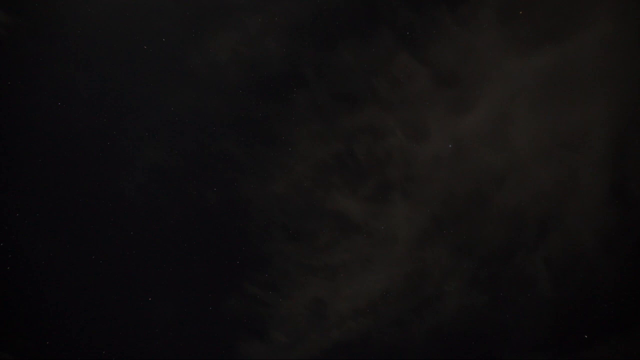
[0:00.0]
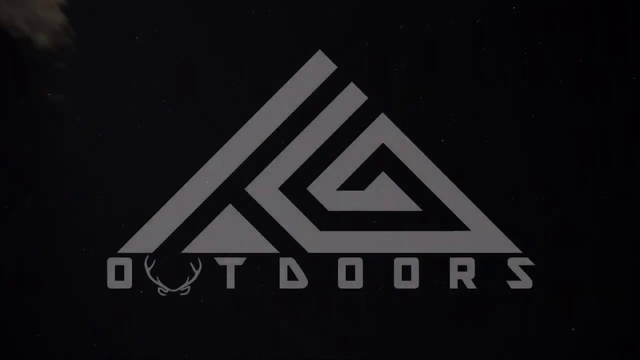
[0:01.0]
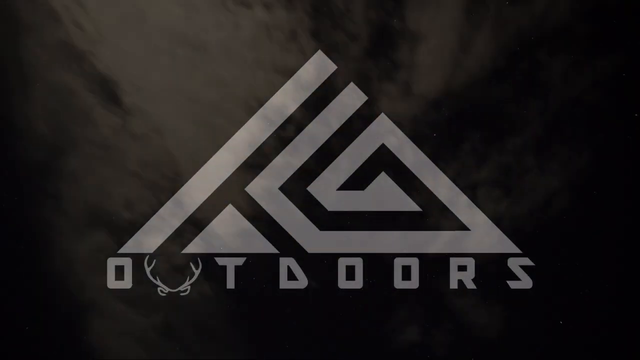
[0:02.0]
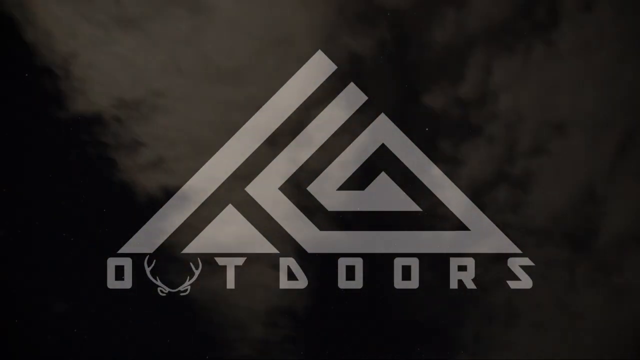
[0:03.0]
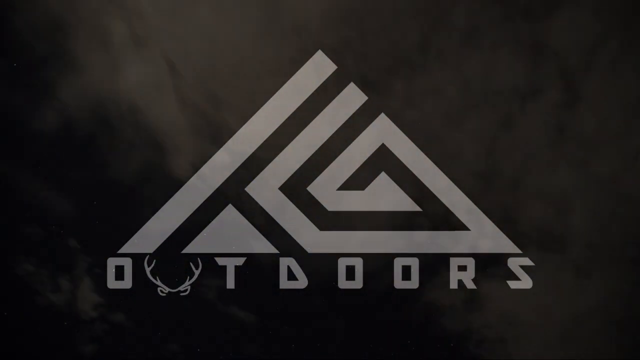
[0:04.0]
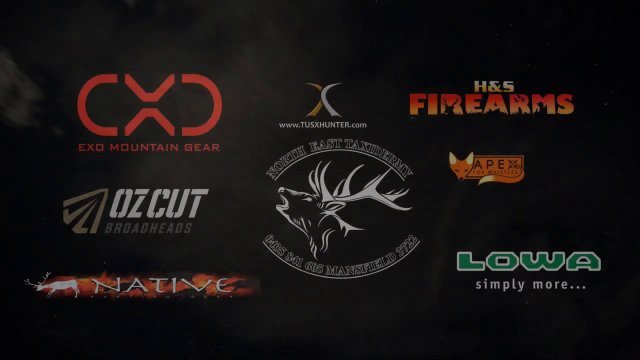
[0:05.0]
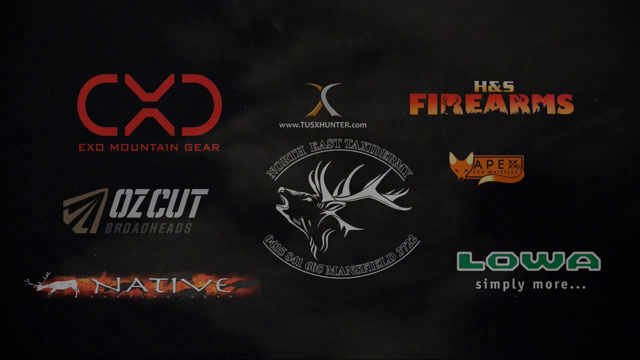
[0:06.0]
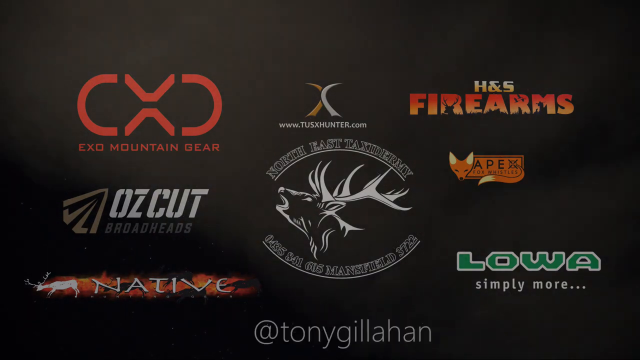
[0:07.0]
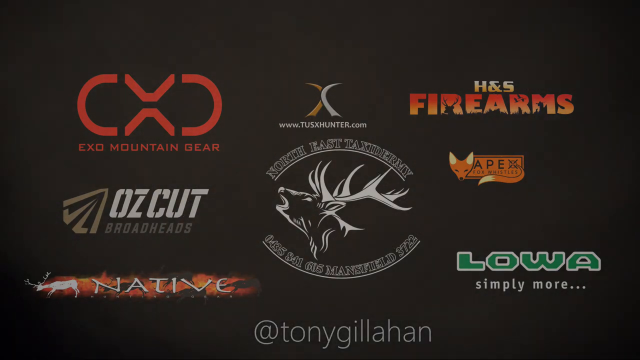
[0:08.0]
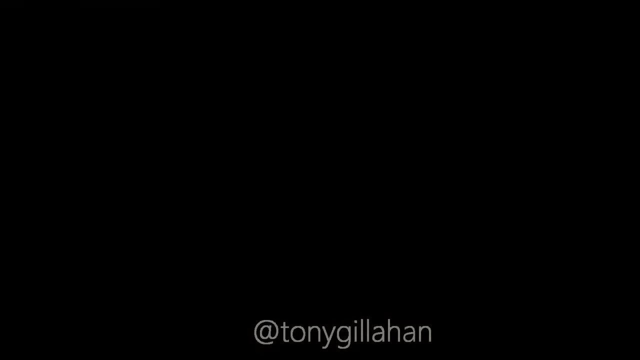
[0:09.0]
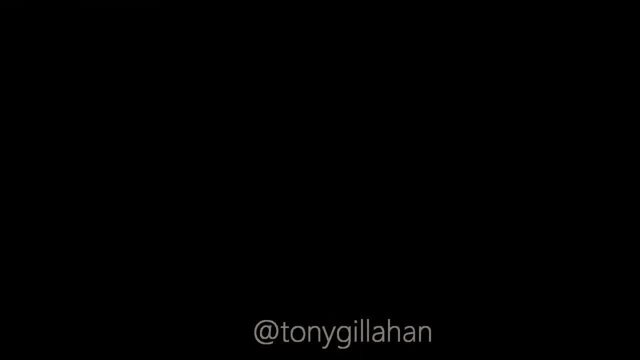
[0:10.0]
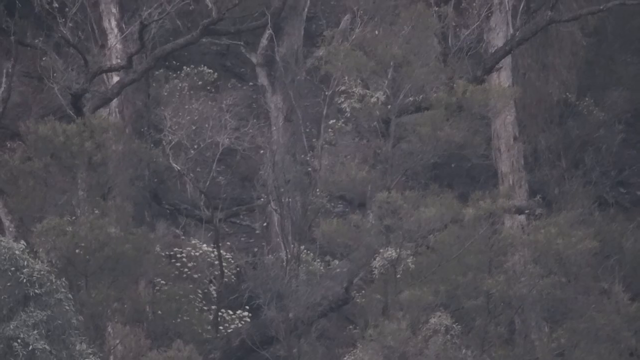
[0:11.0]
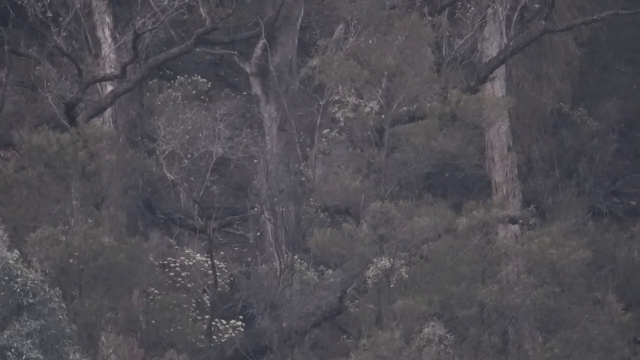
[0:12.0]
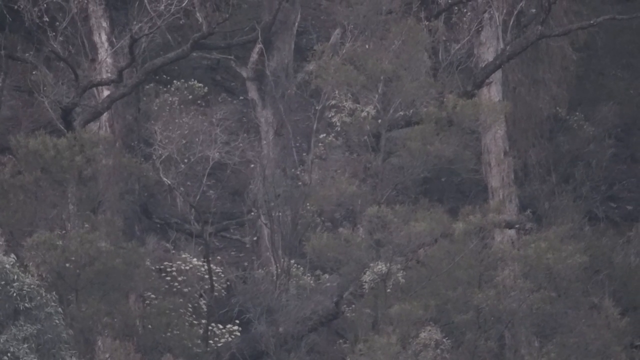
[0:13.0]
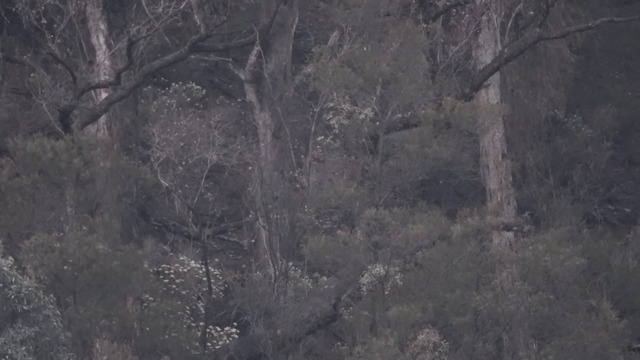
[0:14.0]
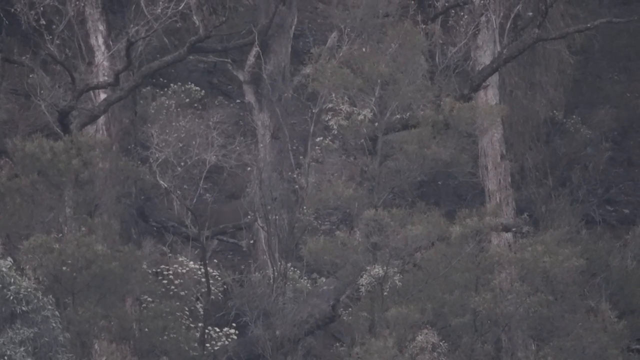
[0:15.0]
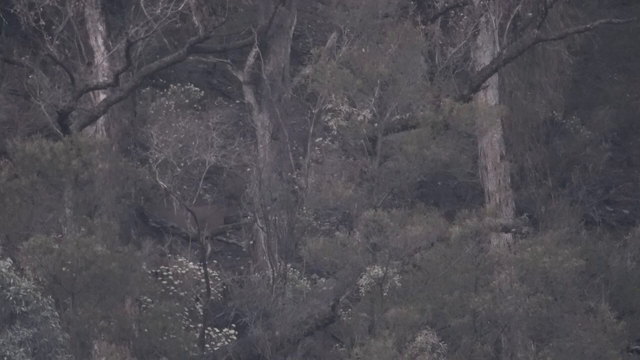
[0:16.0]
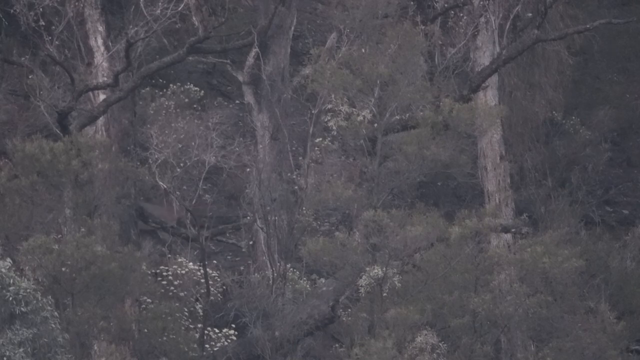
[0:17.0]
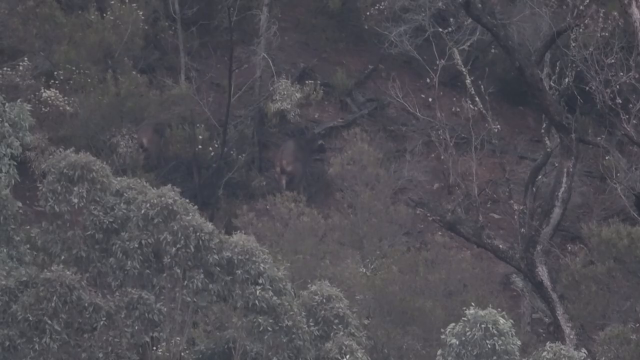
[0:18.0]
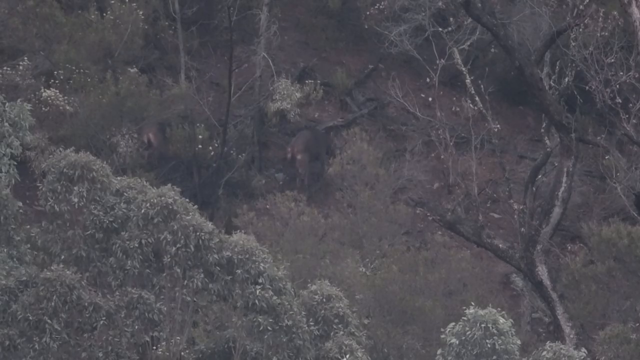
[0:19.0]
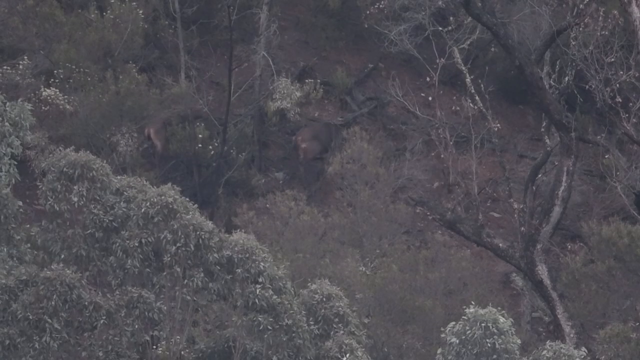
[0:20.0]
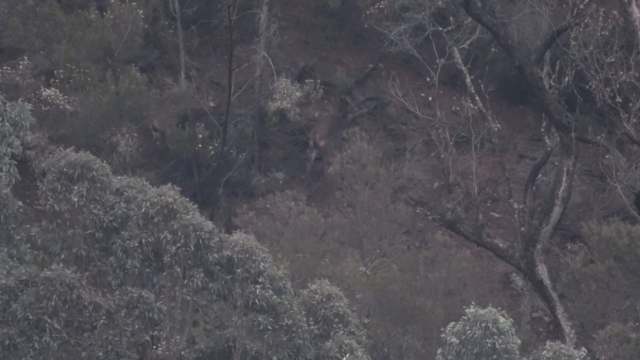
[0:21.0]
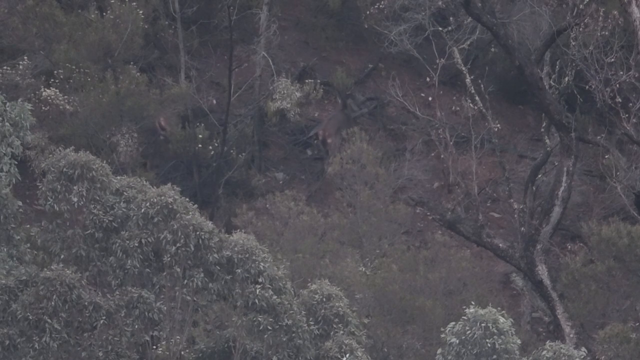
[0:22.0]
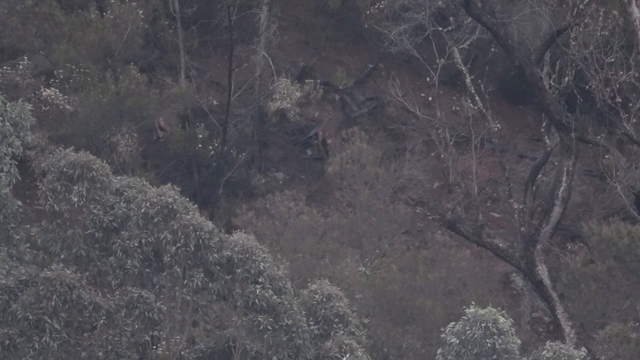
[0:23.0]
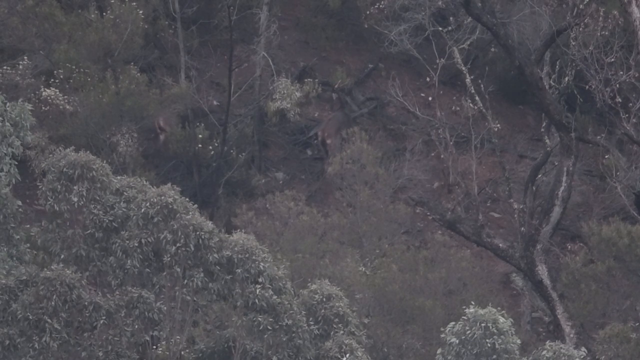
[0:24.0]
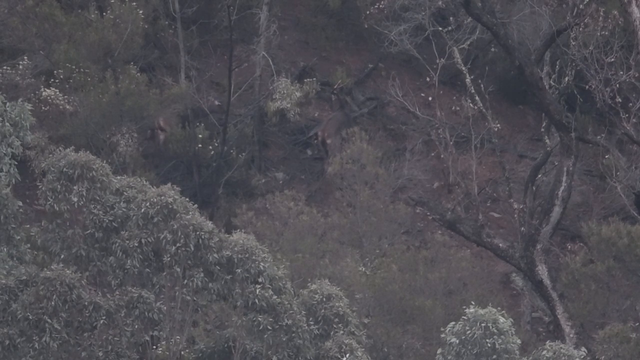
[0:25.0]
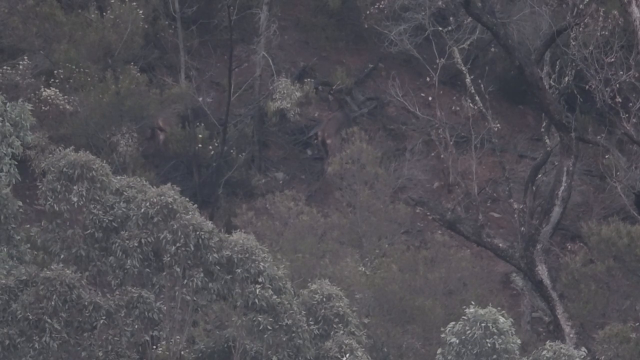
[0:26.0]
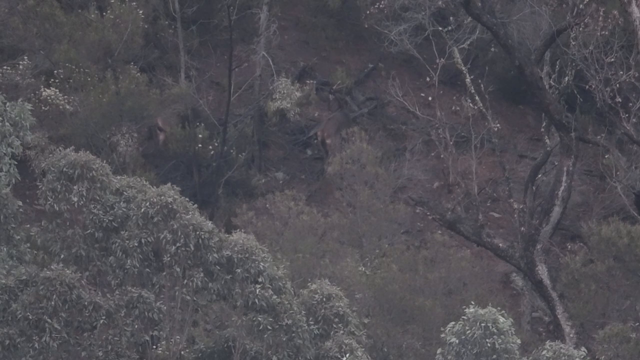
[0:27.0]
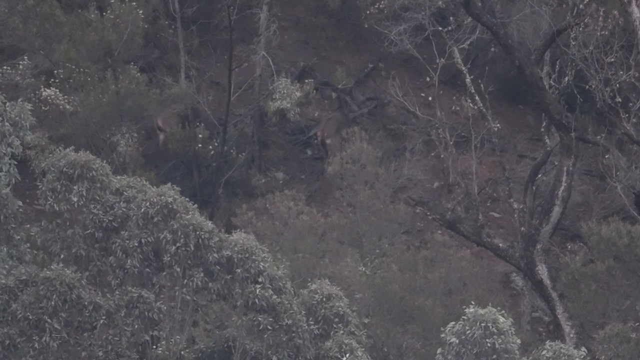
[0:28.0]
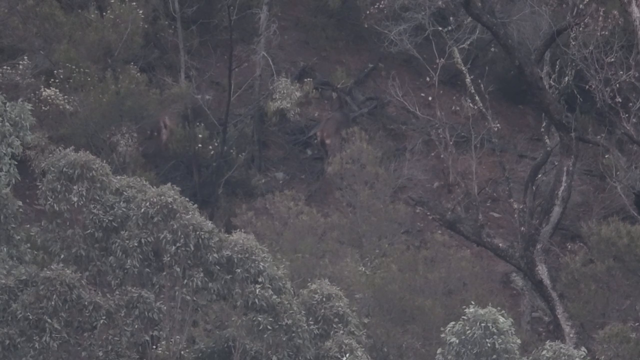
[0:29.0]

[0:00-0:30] The video begins with a triangular logo for outdoors on a black background. The U in outdoors is made up of a pair of antlers forming the U shape. There is a triangle above the T, and the D in doors is shaped like a triangle. A line above the first O in outdoors forms the side of the triangle, and an arrow shape forms the rest of the triangle. Smoke or cloud moves across the logo. Next, a number of logos appear on the page, including Exo Mountain Gear, tuskhunter.com, H&S Firearms and Apex. The centre logo shows a roaring stag's head and says "North East Taxidermy" on the top. "@Tony Gillaghan" appears at the bottom of the screen. The scene then changes to a wooded or forest area with a deer walking through the centre. Another shot shows two deer walking on the ground beneath trees, and one stops to take a bite of some leaves.